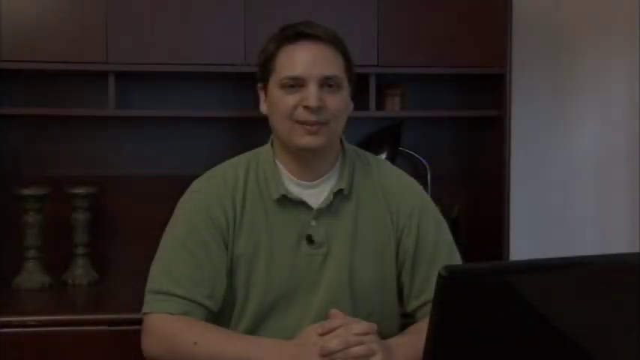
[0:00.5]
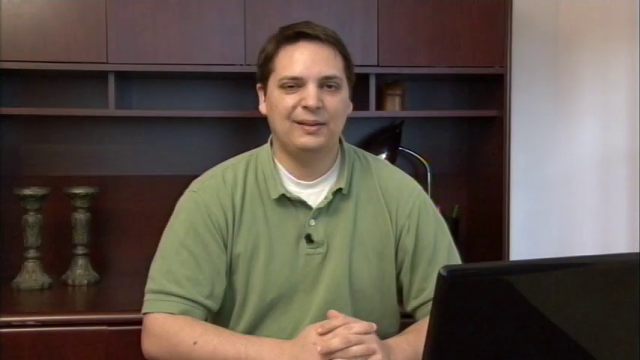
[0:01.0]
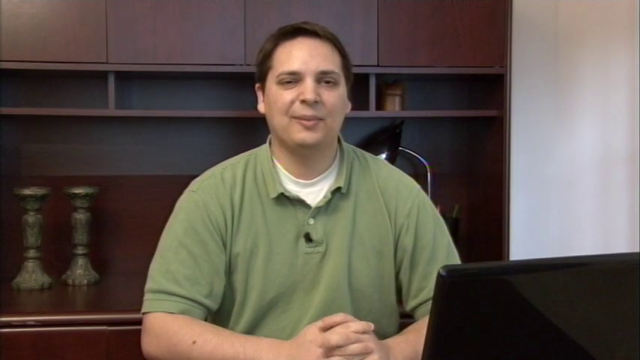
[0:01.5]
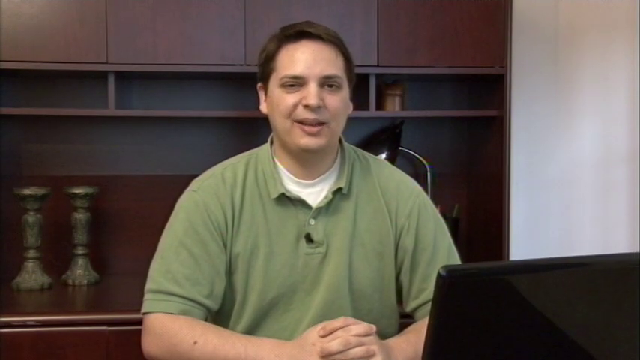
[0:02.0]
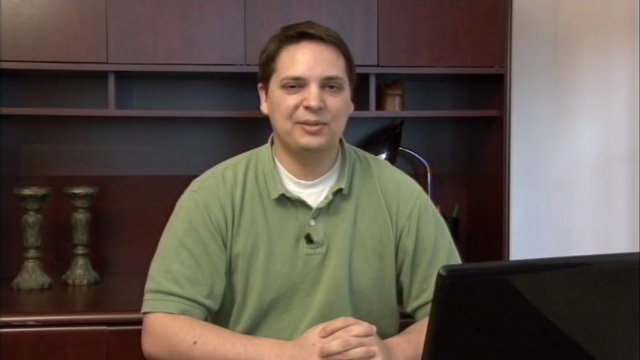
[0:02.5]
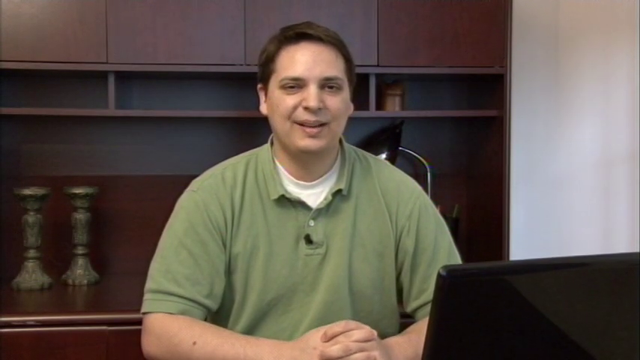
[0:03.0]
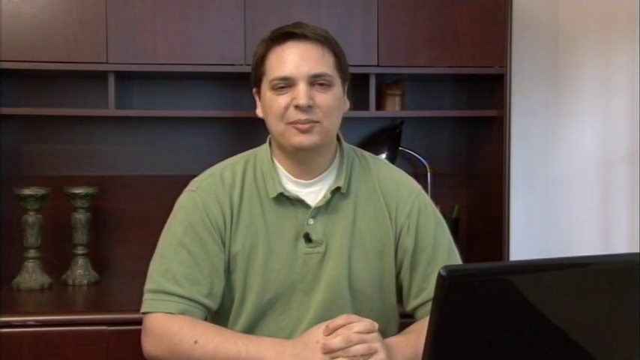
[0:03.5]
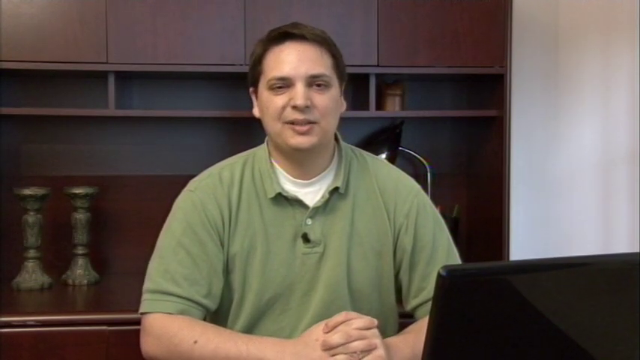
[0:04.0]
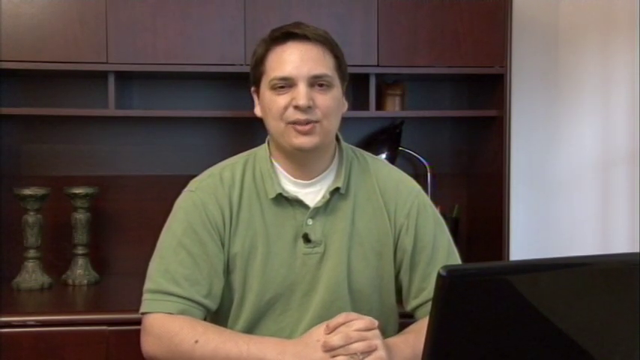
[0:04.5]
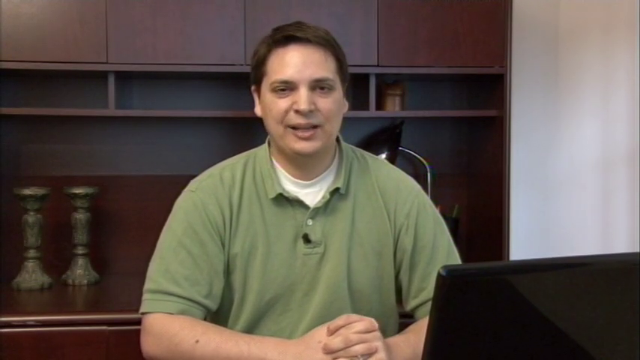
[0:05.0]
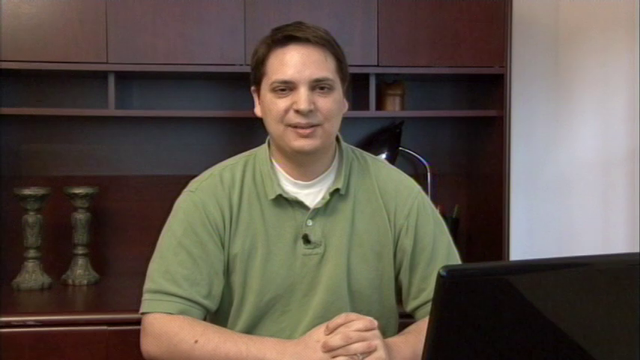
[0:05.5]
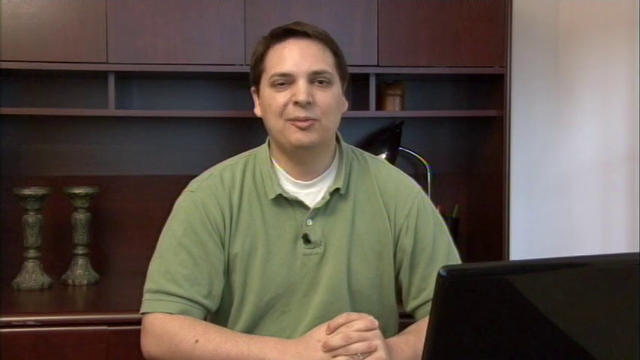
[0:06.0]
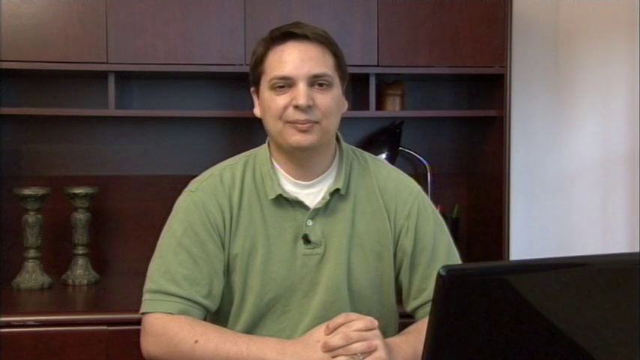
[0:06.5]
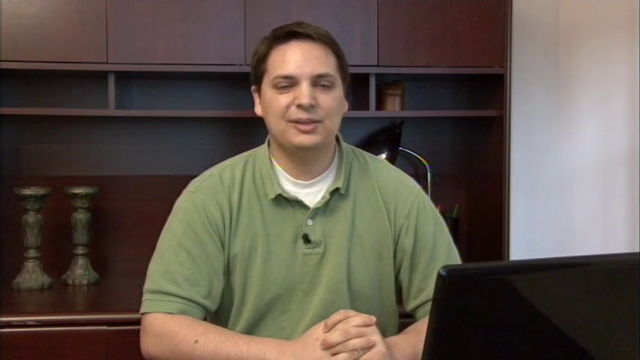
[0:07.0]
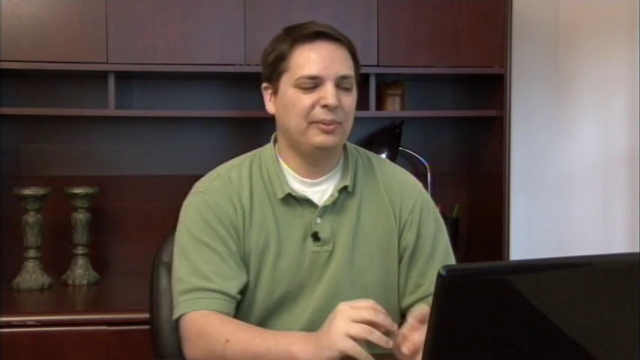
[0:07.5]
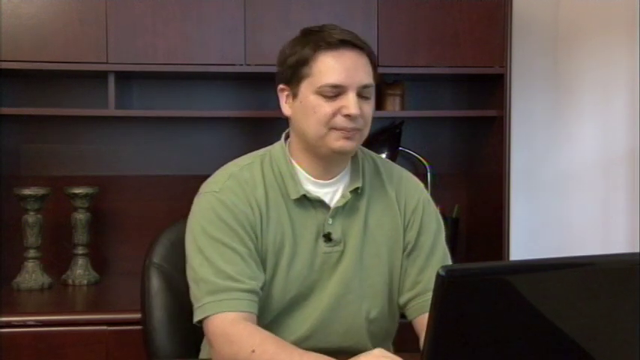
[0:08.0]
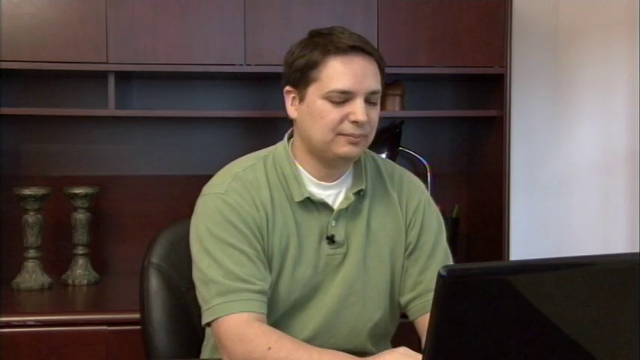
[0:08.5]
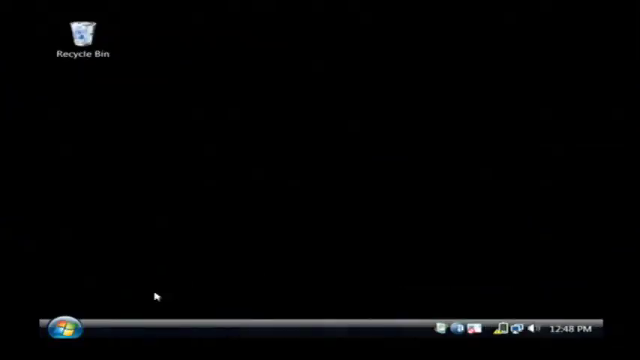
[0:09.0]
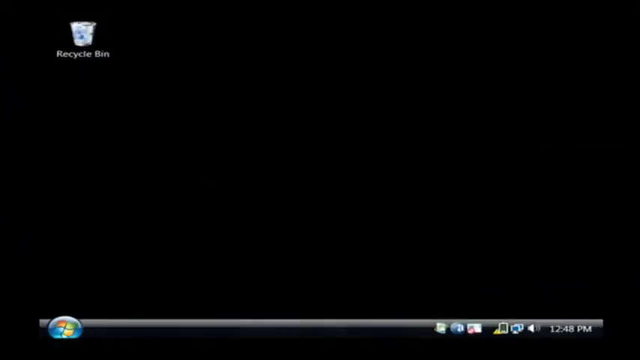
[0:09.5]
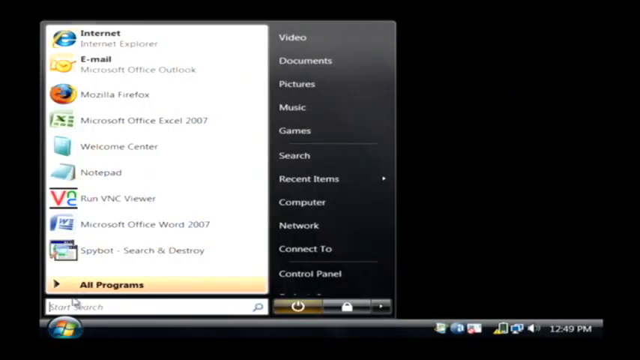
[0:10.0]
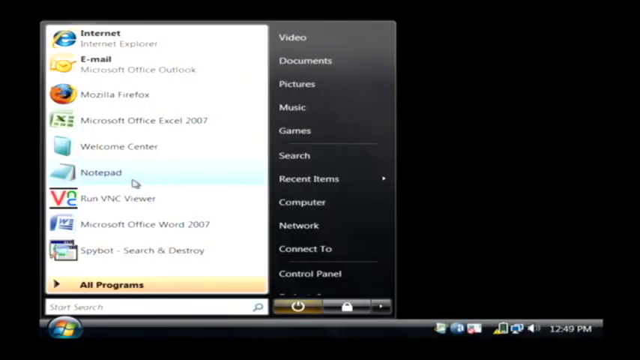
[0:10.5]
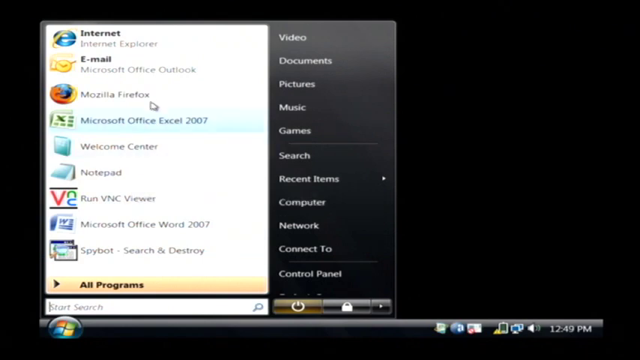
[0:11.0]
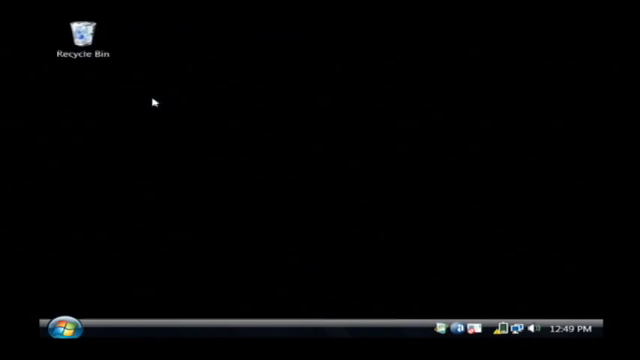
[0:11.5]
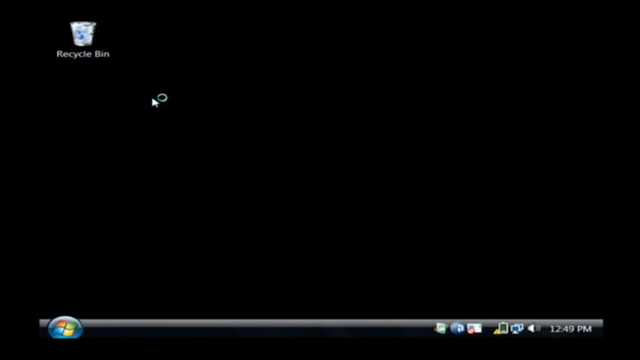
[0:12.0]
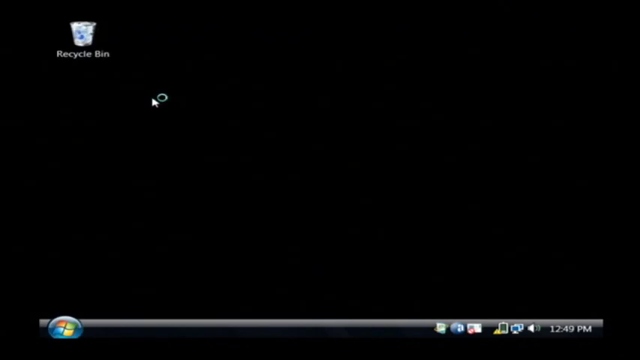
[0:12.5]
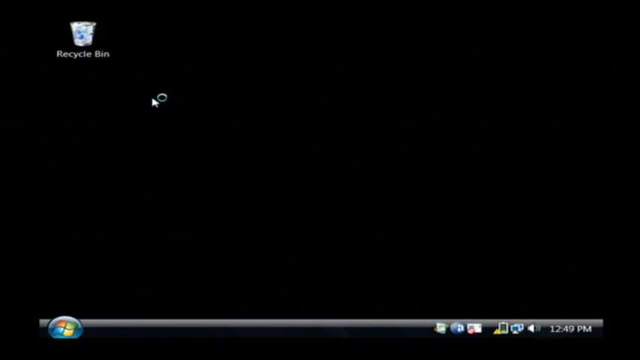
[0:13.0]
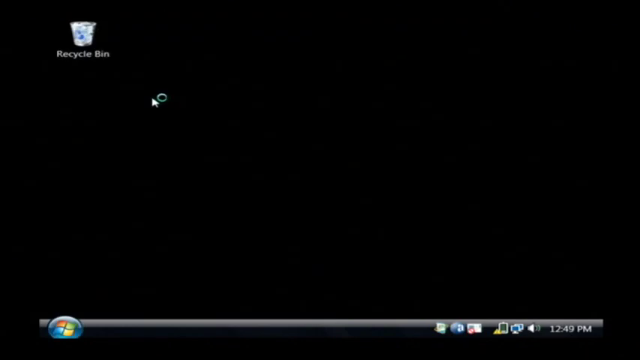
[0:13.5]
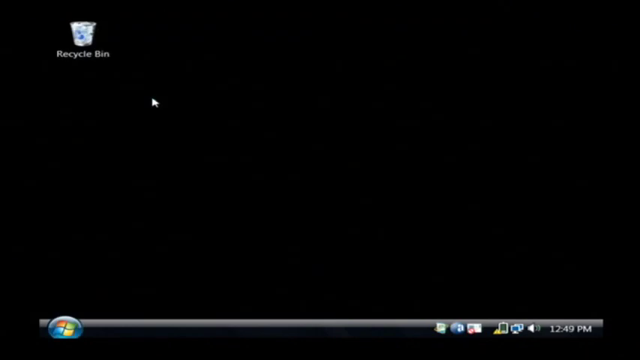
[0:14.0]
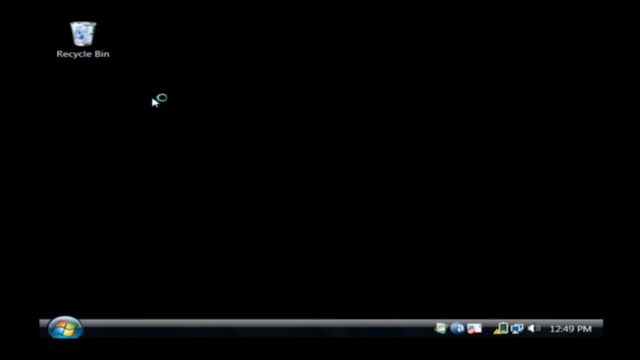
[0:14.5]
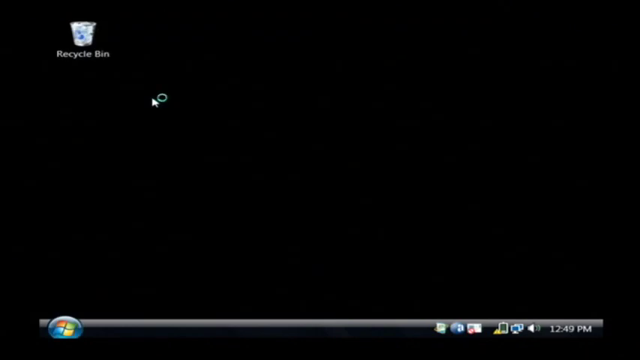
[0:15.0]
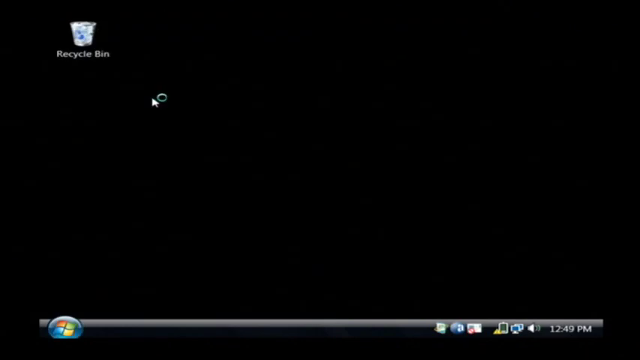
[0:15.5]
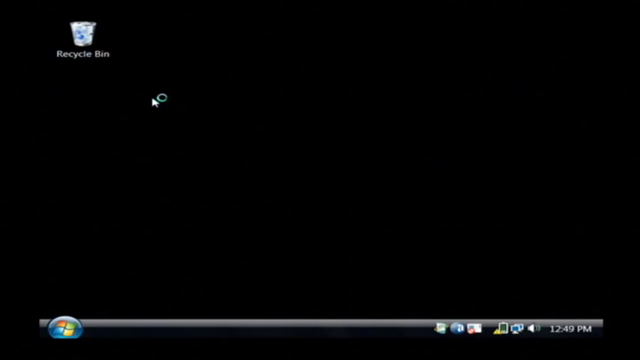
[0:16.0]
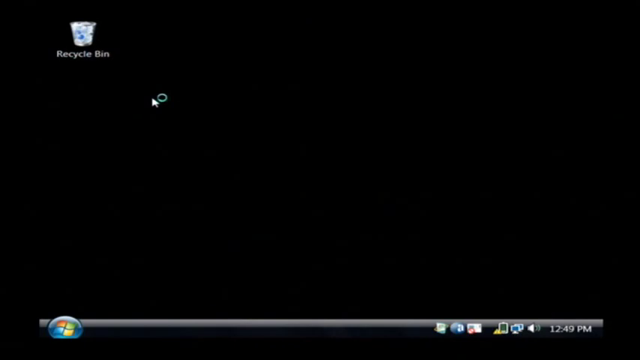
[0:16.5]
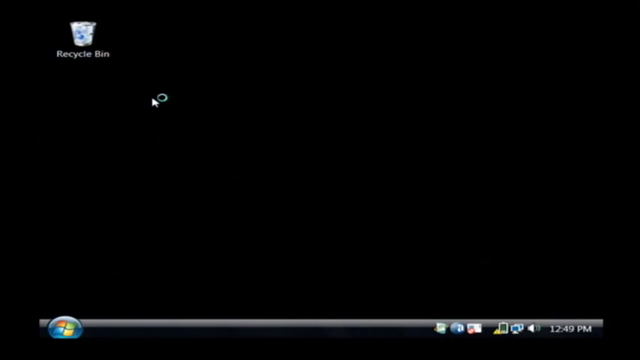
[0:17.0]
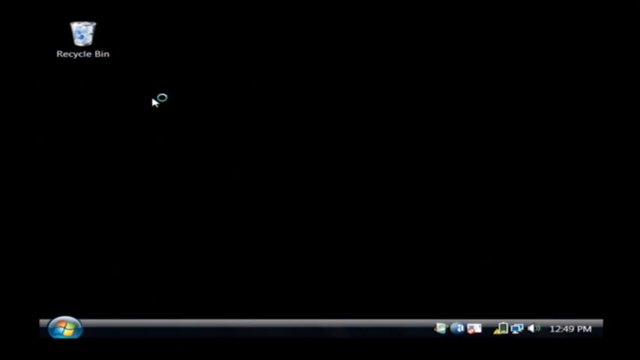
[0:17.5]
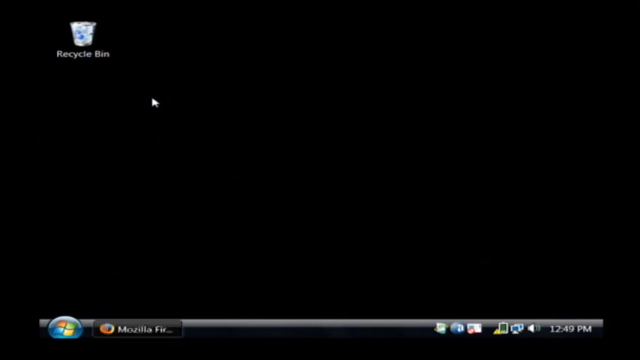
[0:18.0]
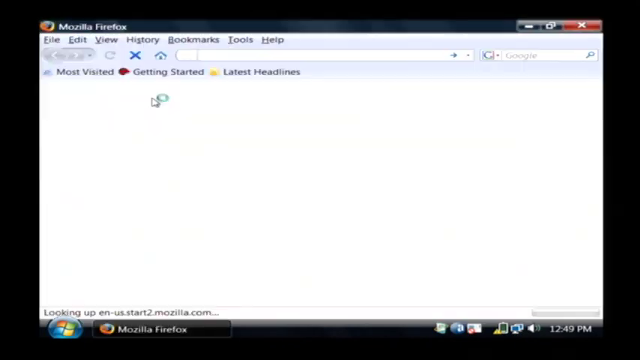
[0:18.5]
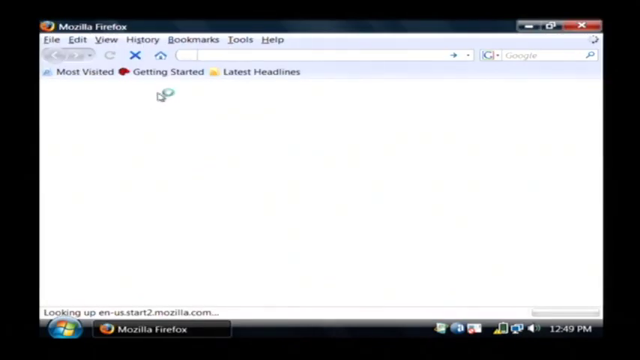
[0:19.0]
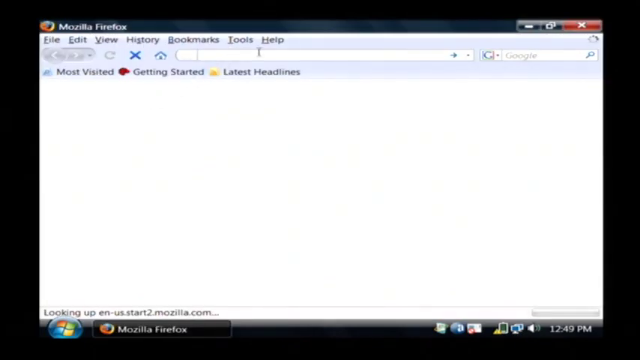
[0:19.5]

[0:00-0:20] A man faces the camera, with only his upper body visible. He appears to be wearing a green collared shirt with a white shirt underneath. He appears to be sitting at a desk: in the background there is wooden furniture, such as a desk and some cabinets, and in front of him there appears to be some sort of computer monitor or laptop screen. He looks at the camera with a subtle smile, his hands folded together and appearing to rest on a table in front of him, and talks to the camera. He then unclasps his hands and looks like he may be typing on the computer, his gaze pointing down toward it. The video switches to the computer's display, where a menu is open and some applications have popped up. The cursor hovers over some of the applications and clicks on Mozilla Firefox. The menu window disappears, and beside the cursor a blue circle appears to move in a circle, showing that it is loading.